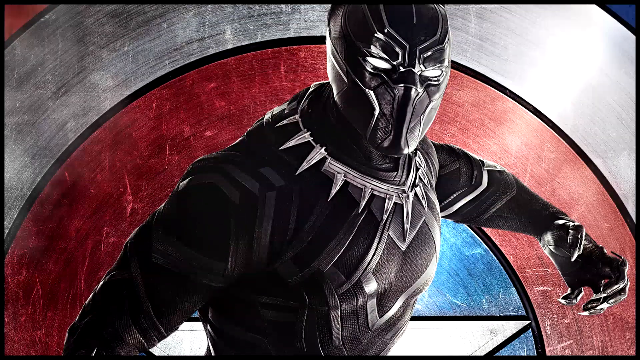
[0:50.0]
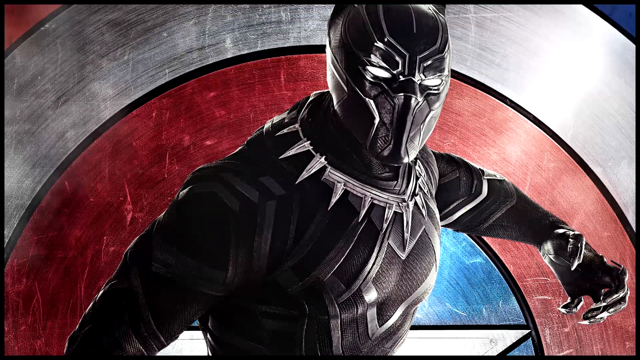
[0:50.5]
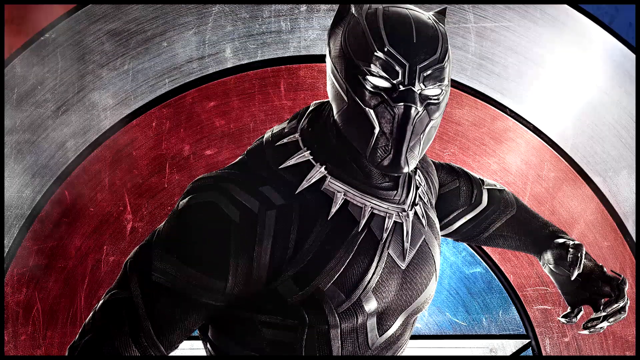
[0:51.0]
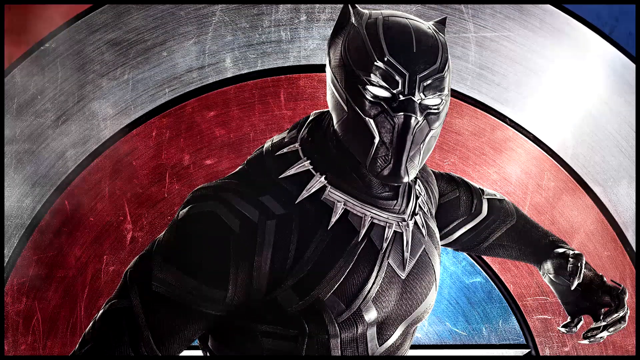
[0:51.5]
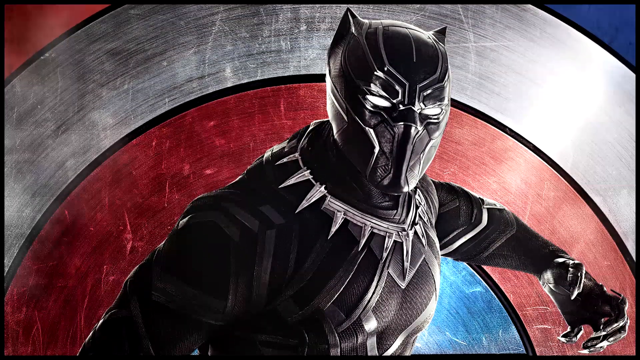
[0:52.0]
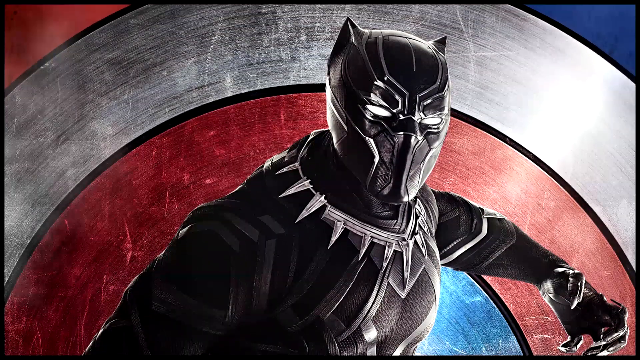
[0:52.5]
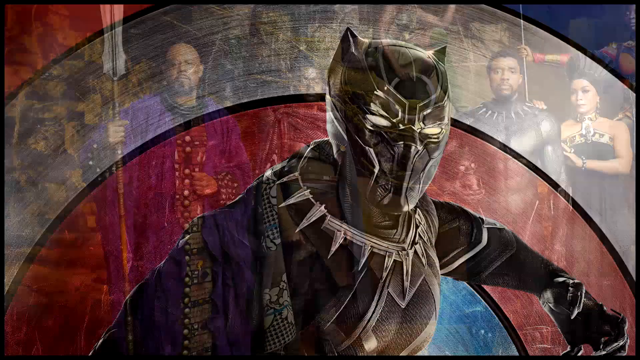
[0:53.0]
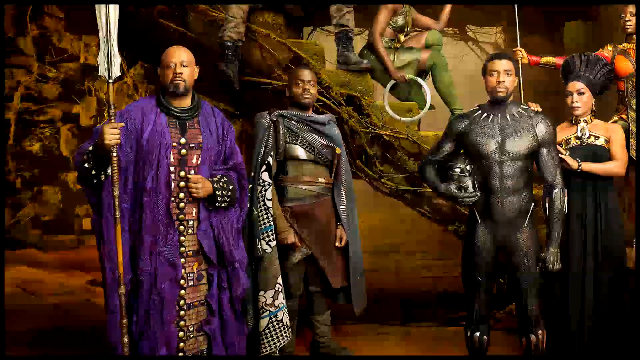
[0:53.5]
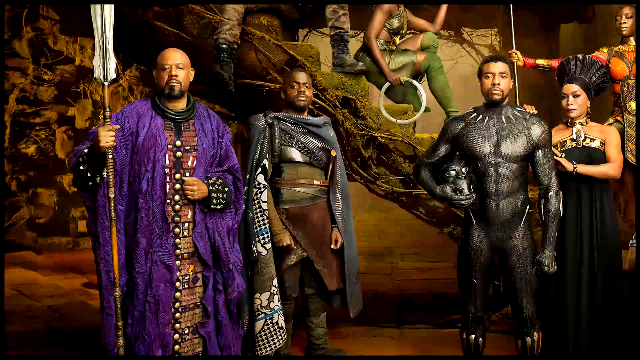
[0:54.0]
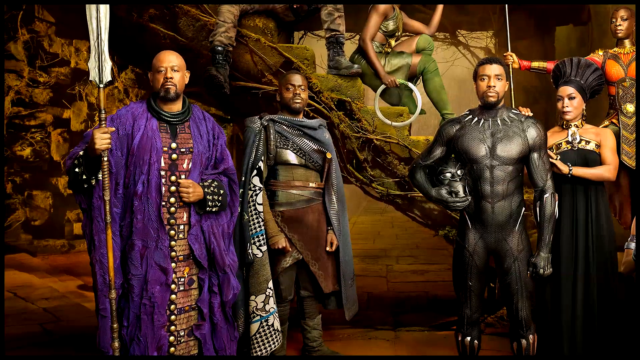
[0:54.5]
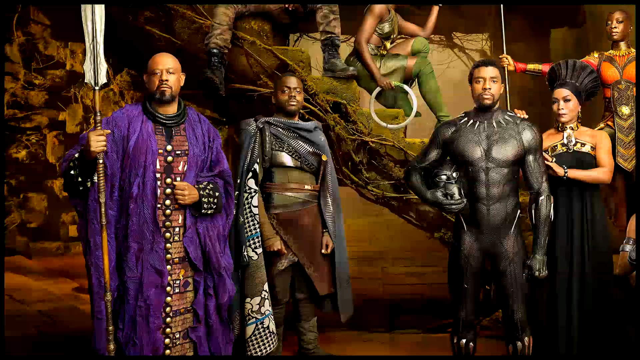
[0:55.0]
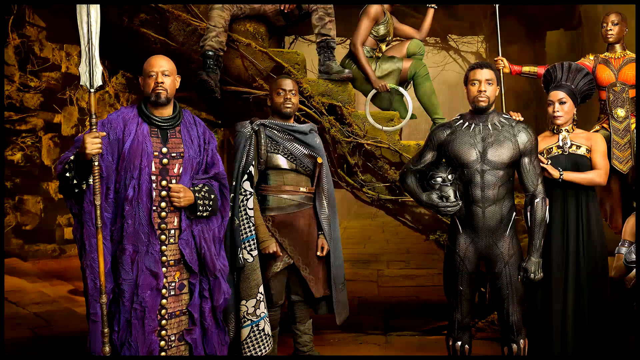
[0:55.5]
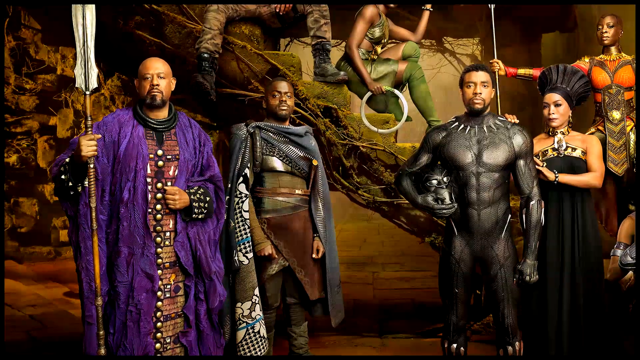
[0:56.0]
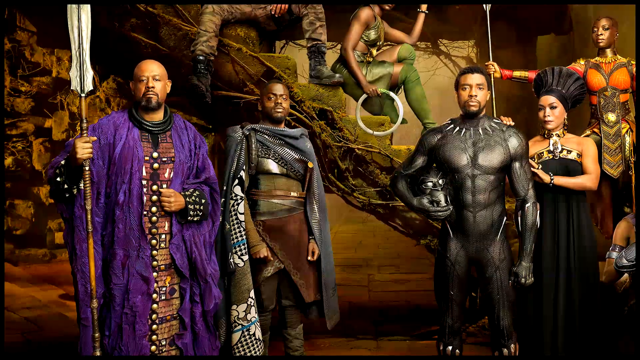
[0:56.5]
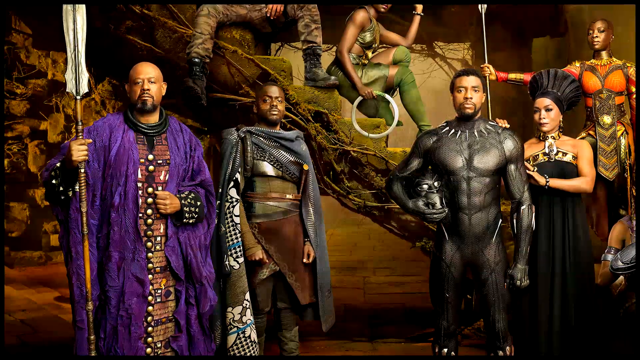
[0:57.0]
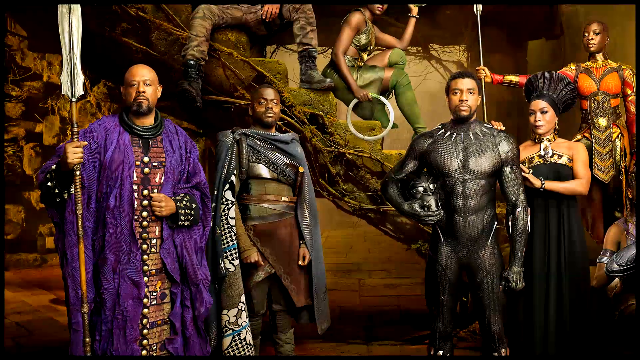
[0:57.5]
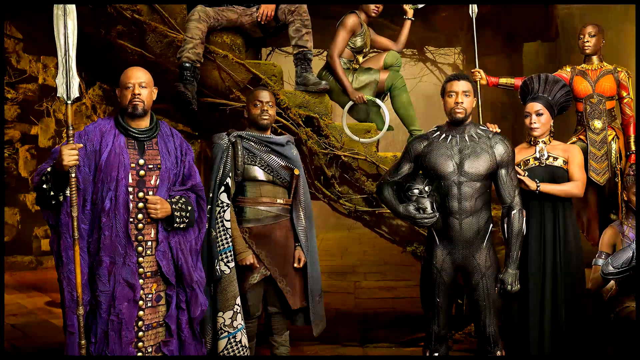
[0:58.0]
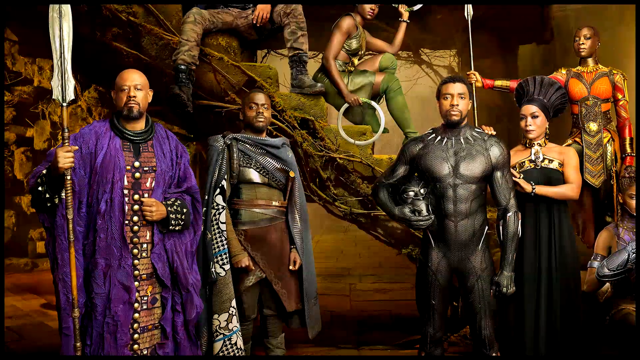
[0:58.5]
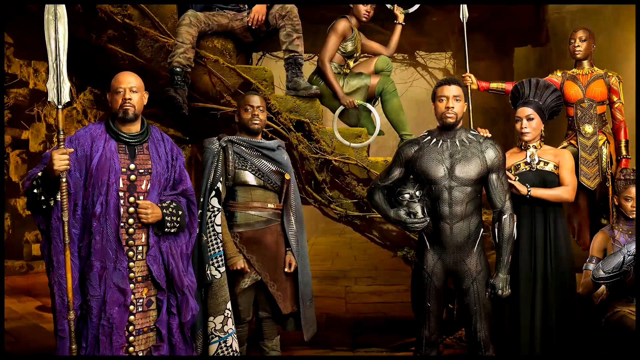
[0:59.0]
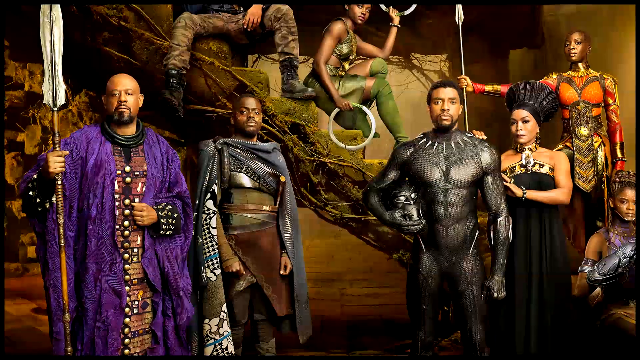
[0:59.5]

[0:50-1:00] Chadwick Boseman's character is placed against the Marvel Comics emblem, a blue, red and white shield. He is in his black costume and flexes his left hand in a claw-like grasp. He wears his necklace with the spears on it. Light leering eyes peek out of the mask, and the mask's peaked ears look animal-like. His chest shows the black and gray design of the costume. Next, several characters from the cast appear. A bald African-American man in a purple cloak holds a spear. Next to him is a young man with a gray scarf wrapped around his costume, which is like a brown leather skirt, with a belt strapped around him multiple times. Both look very serious. Chadwick, in his outfit, is next to him on the right, holding his mask in his right hand against his torso. Next to him, a woman wearing a black turban and a black dress holds her left hand on his bicep. Behind her is a woman in an orange outfit that looks ready for battle, with a brown tie or scarf hanging down that looks thick and heavy, as if to protect her. She holds a spear in her right hand. In the middle is part of the body of someone in a green costume, seated and holding a round white object. In the background are some brown twigs wrapped around each other and some leaves on the left, depicting a nature scene.